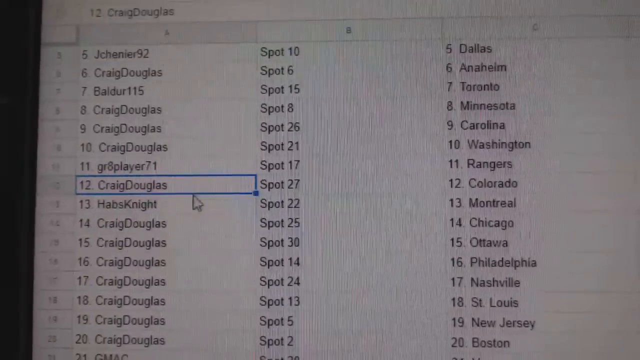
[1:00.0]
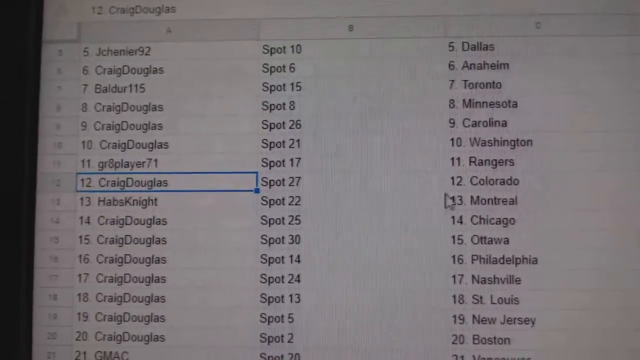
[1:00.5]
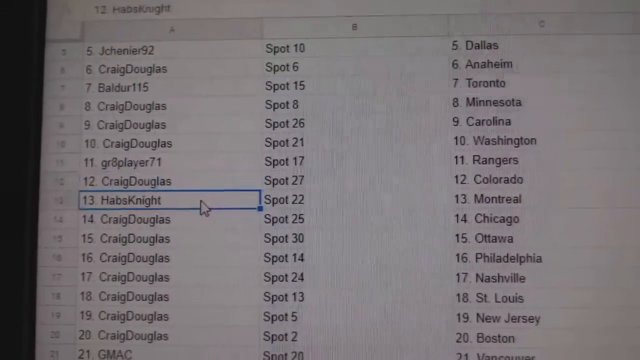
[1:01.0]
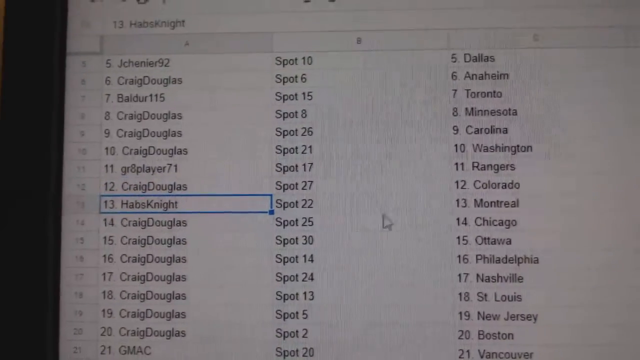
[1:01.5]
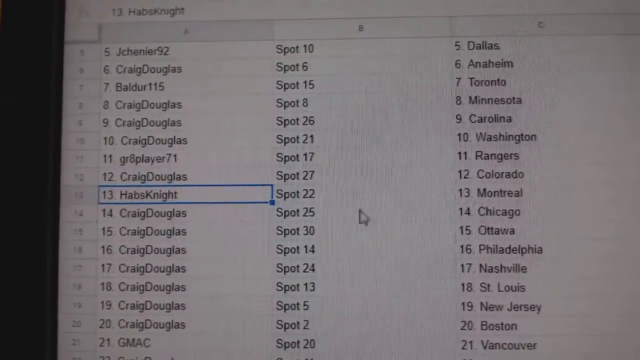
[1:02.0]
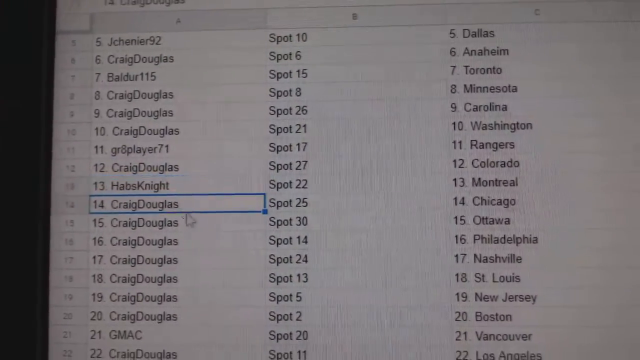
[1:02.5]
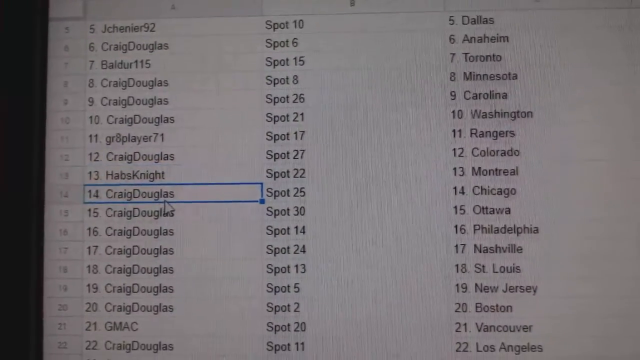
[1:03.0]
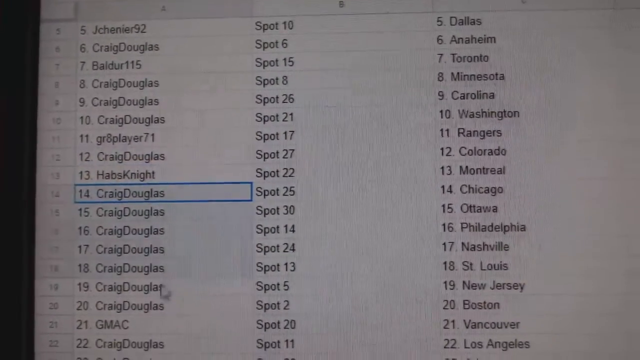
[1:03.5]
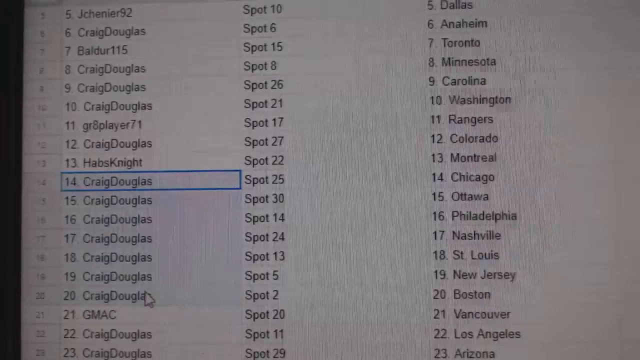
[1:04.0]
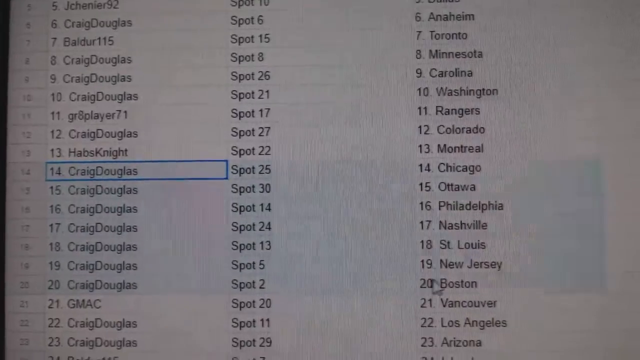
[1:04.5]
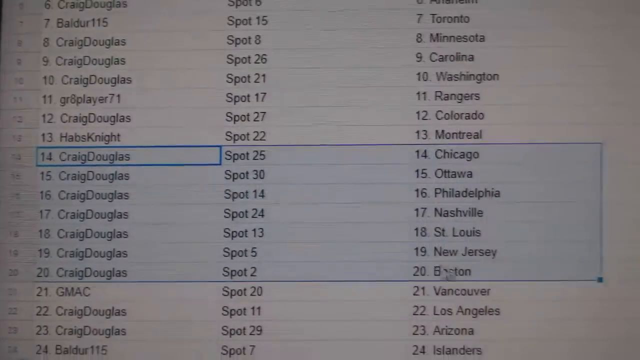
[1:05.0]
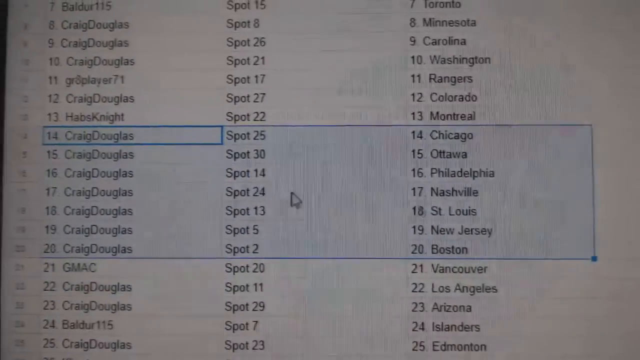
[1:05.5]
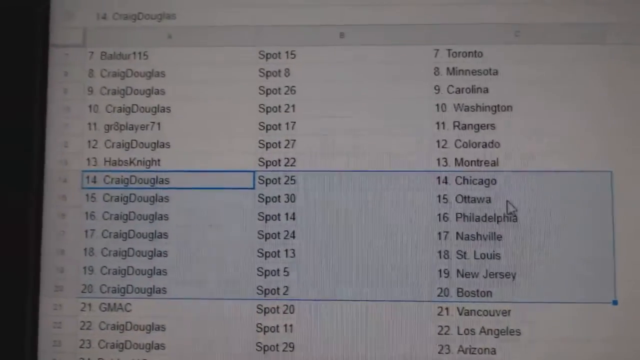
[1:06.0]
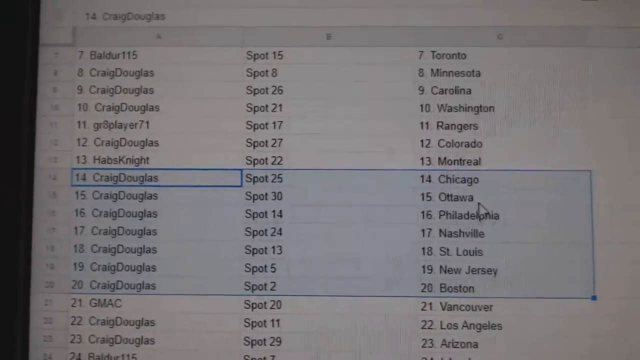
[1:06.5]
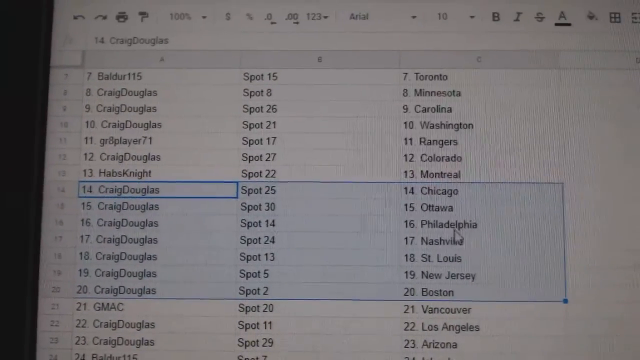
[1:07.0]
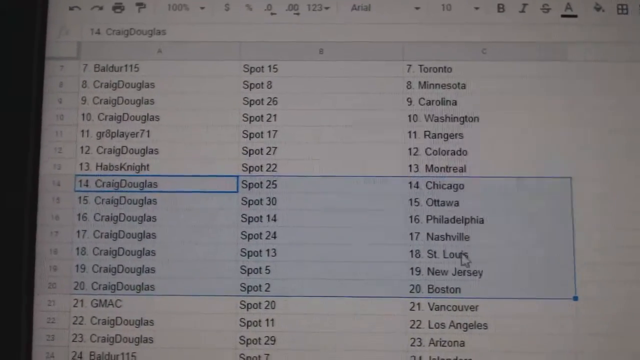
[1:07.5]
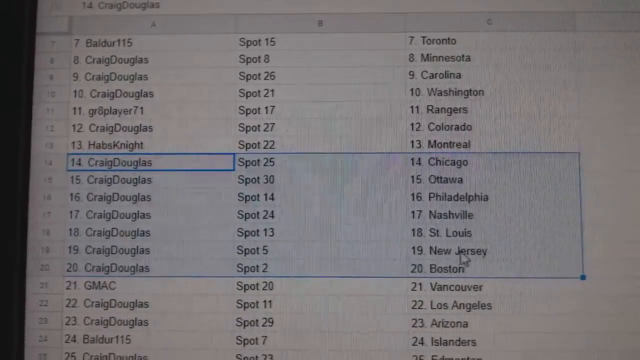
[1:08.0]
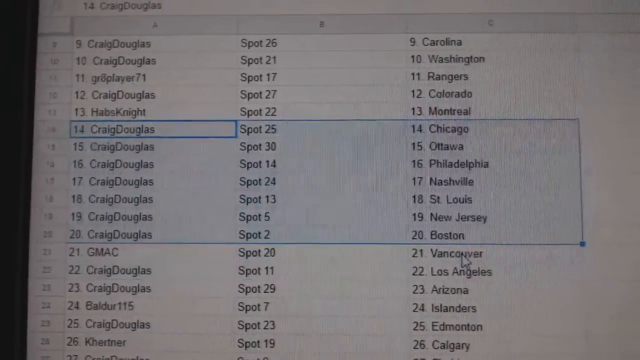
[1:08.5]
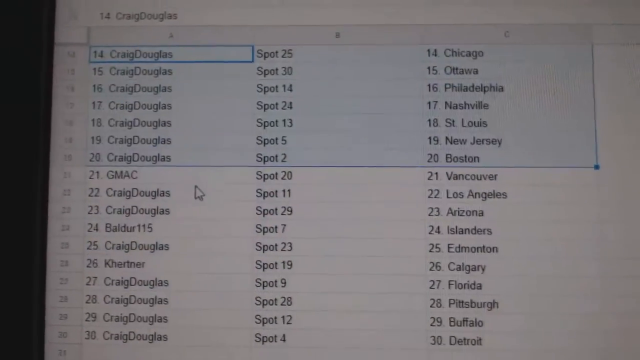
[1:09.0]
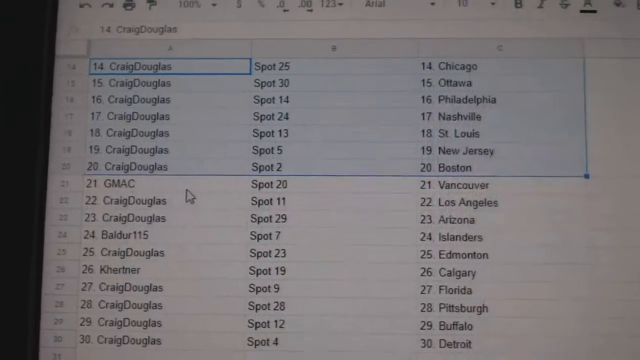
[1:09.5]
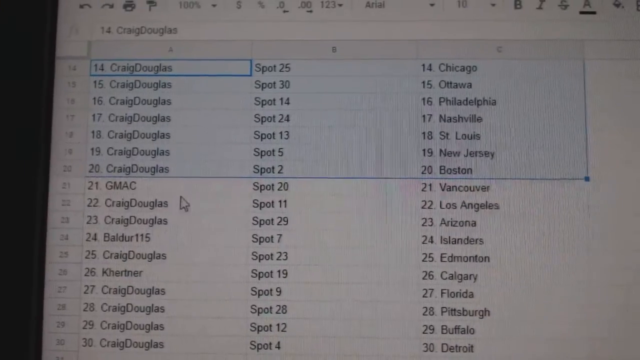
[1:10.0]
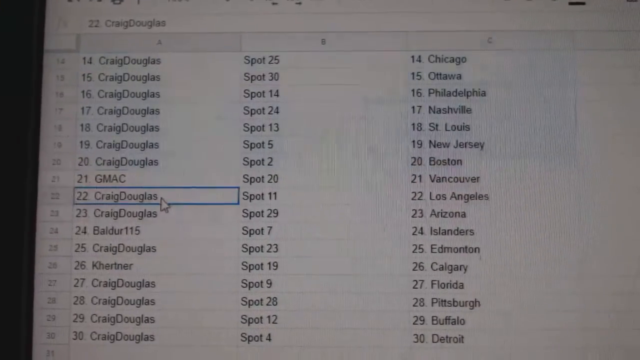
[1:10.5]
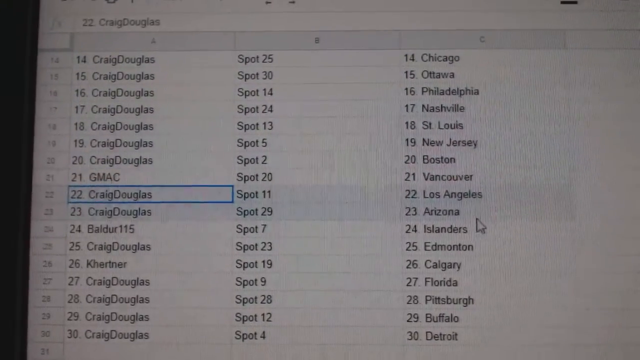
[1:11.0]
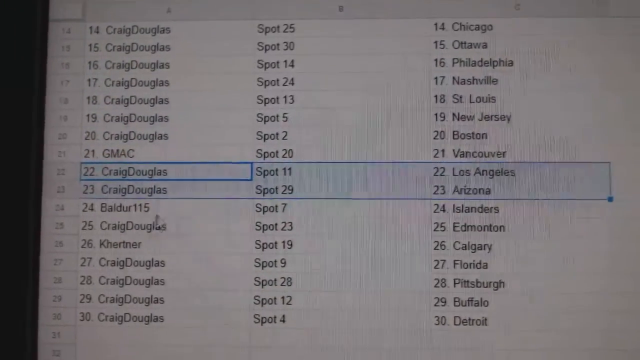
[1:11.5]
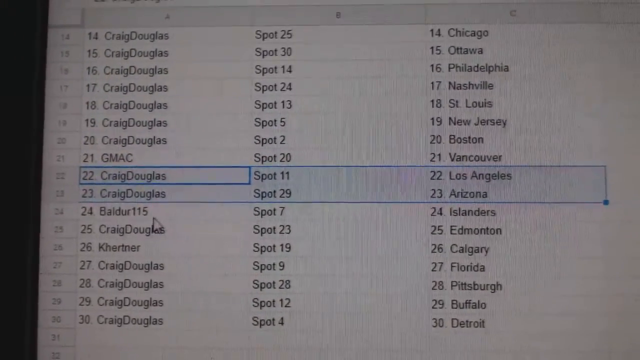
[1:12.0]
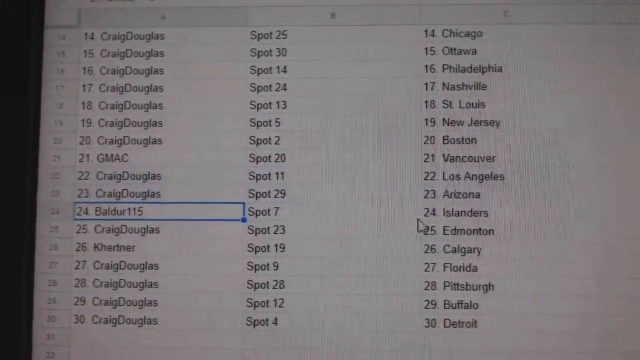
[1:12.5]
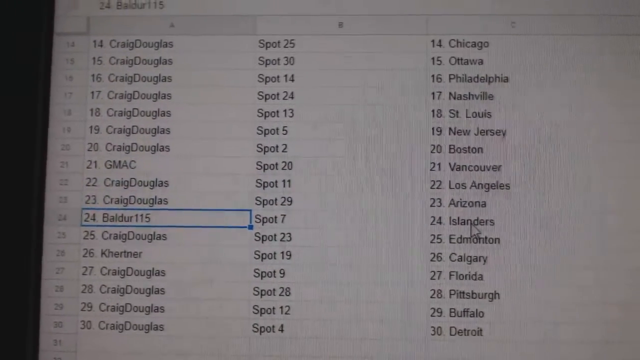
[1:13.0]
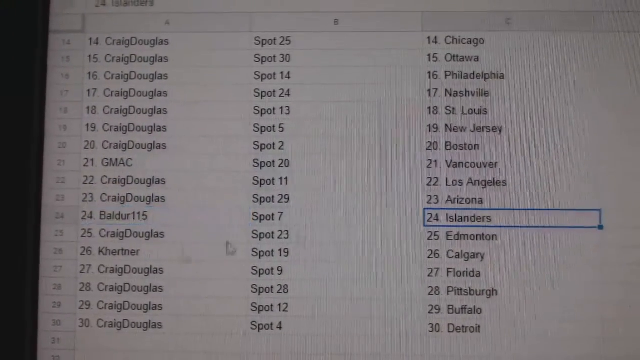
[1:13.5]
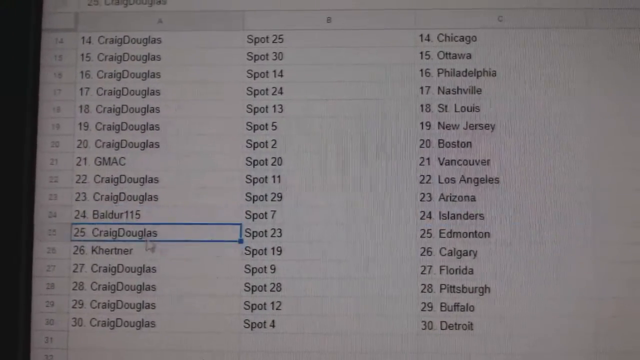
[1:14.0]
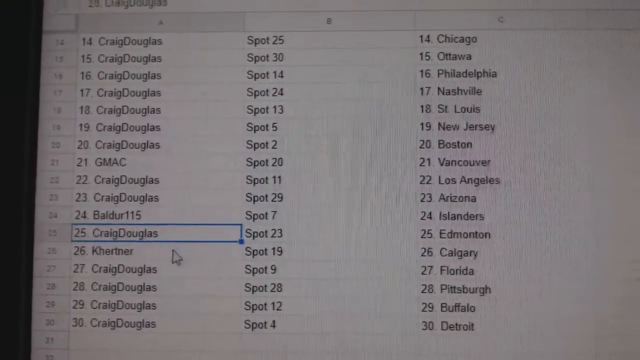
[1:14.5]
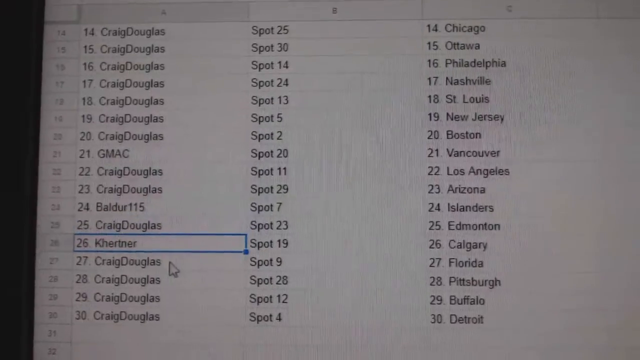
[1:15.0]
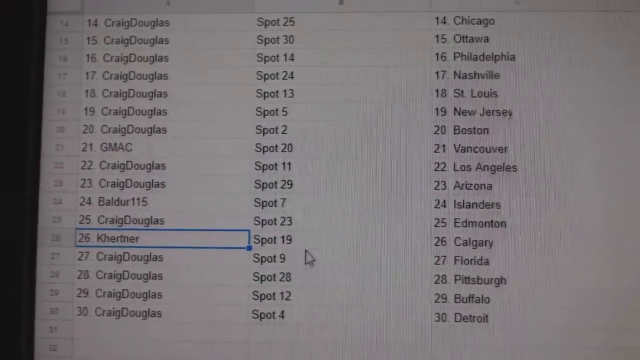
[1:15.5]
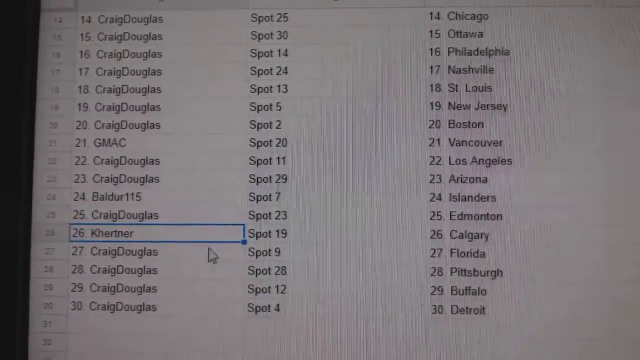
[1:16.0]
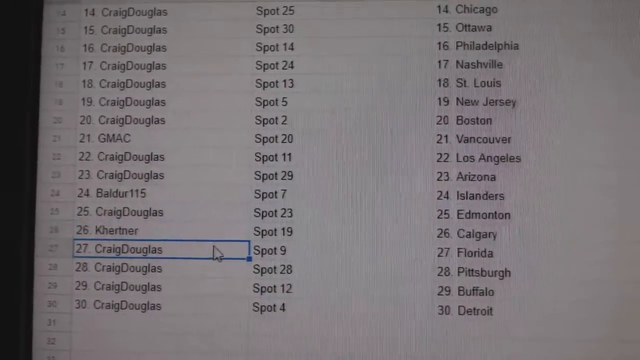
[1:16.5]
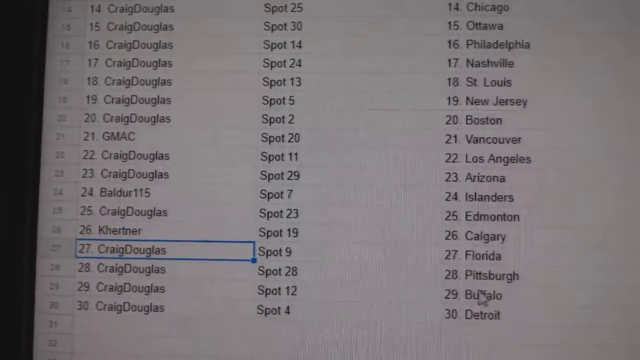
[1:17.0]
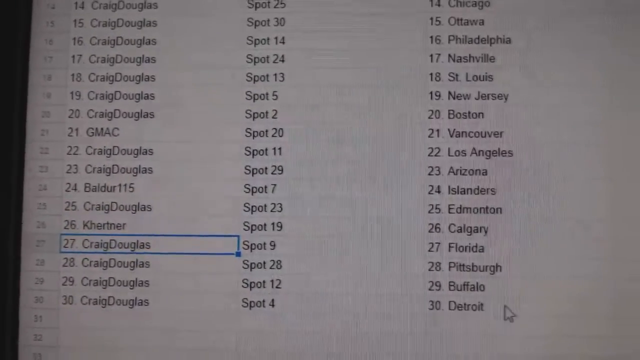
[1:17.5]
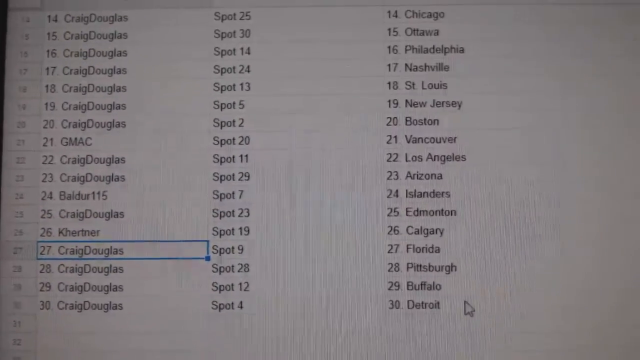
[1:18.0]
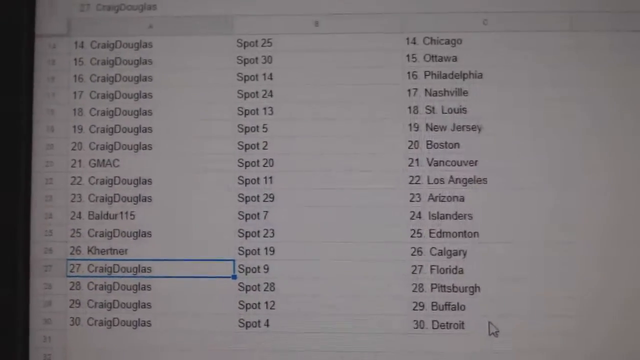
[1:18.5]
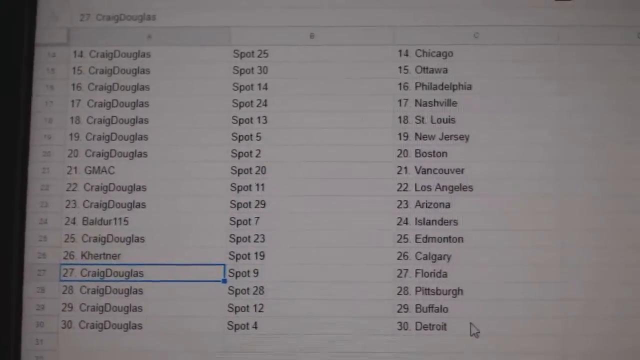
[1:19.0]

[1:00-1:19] A person holds up a camera phone to record the Google Sheet, going through and looking at its three columns: the username, the spot with the number, and the city. The camera is held close enough that the data is legible. The randomizer is not shown here.